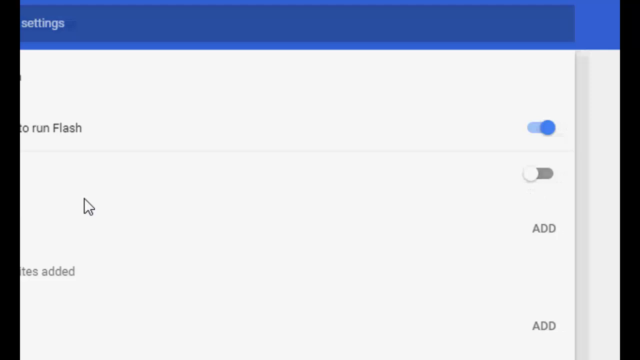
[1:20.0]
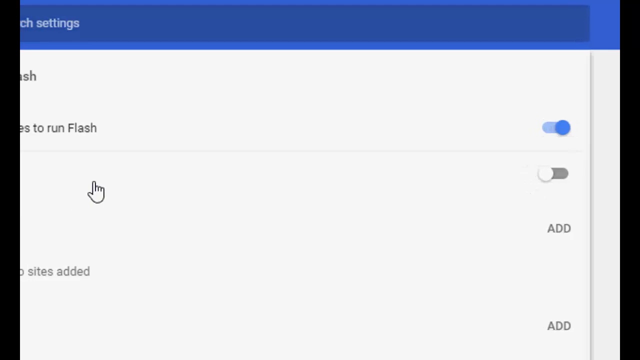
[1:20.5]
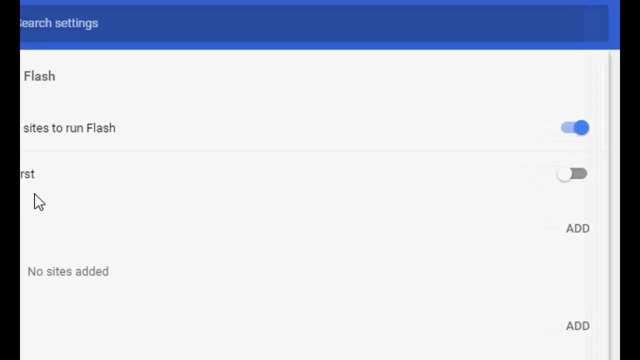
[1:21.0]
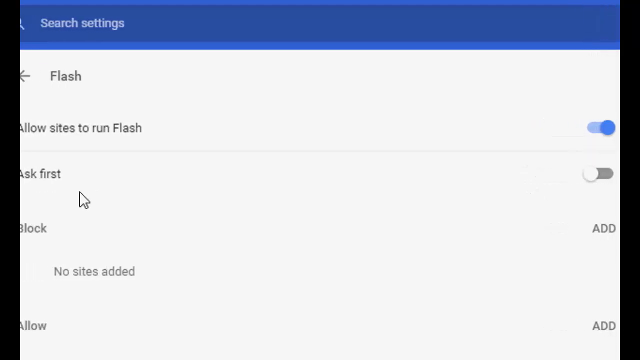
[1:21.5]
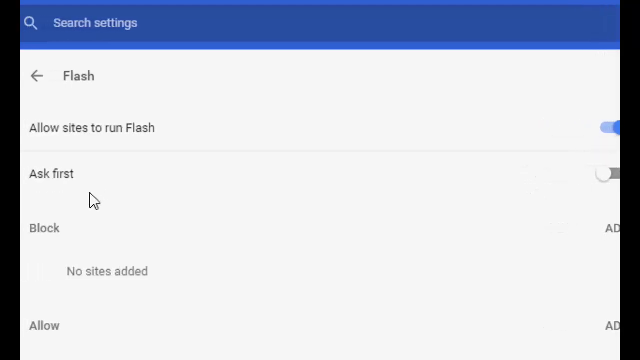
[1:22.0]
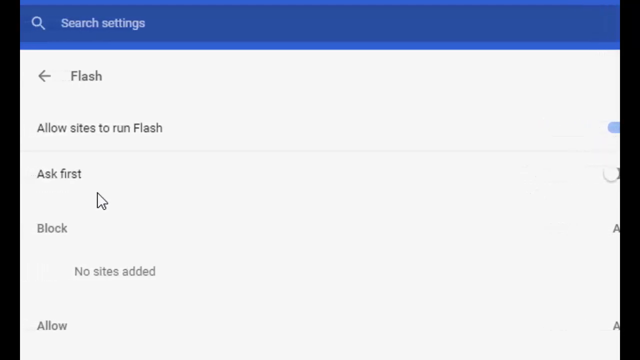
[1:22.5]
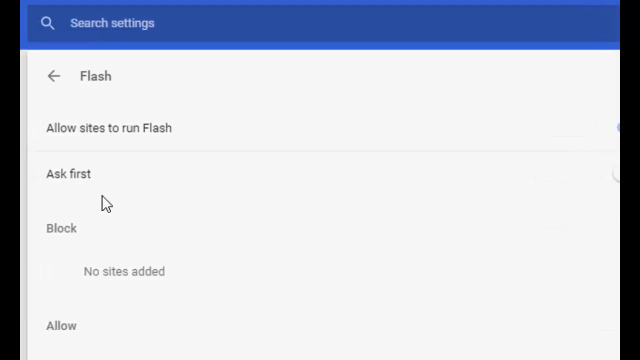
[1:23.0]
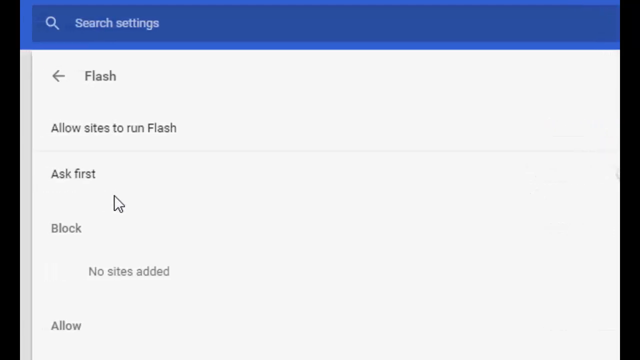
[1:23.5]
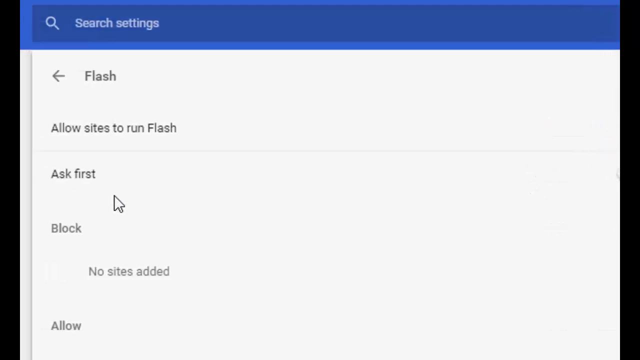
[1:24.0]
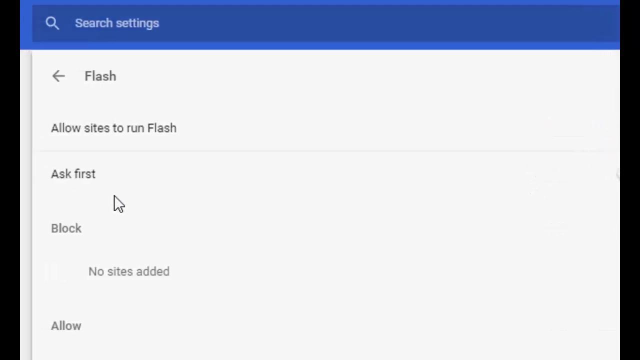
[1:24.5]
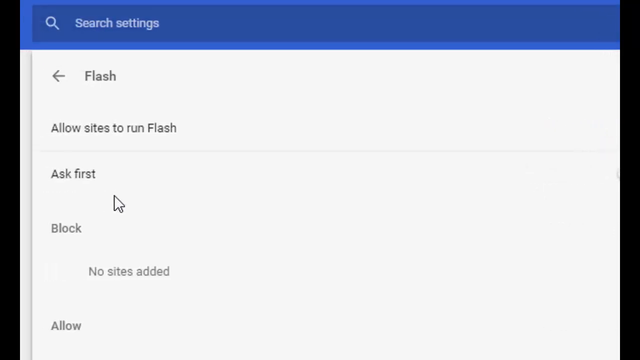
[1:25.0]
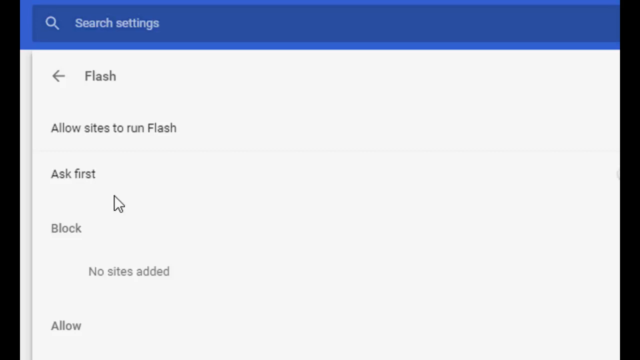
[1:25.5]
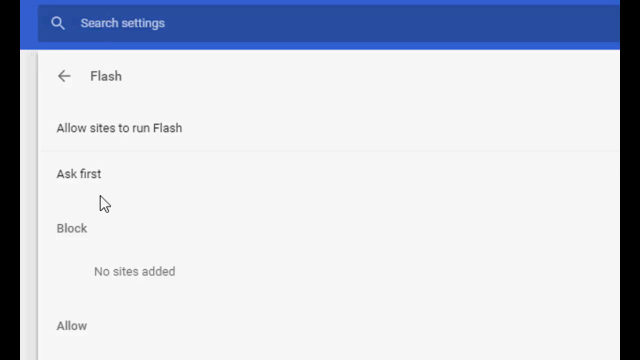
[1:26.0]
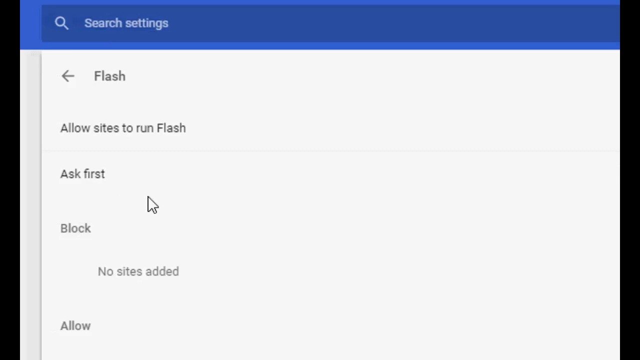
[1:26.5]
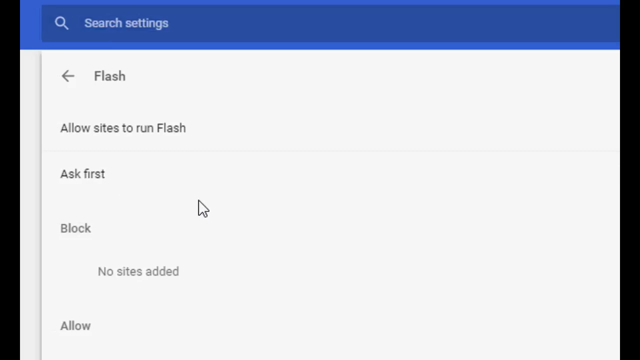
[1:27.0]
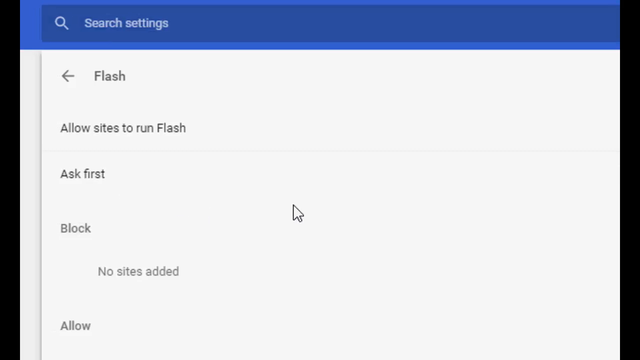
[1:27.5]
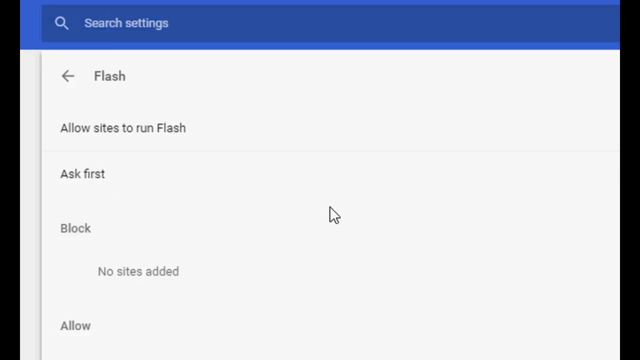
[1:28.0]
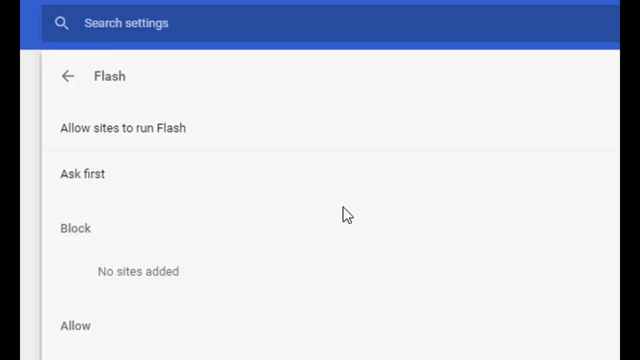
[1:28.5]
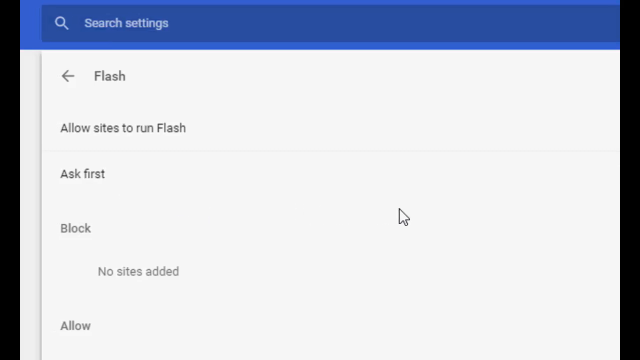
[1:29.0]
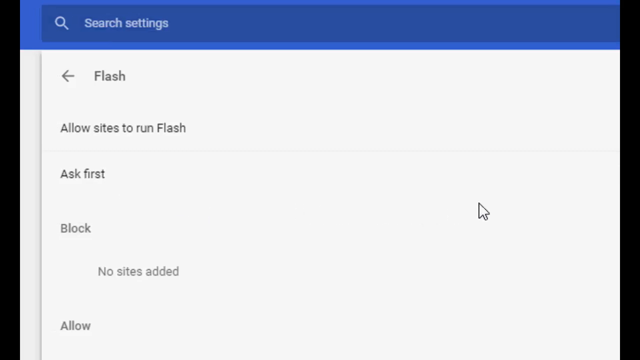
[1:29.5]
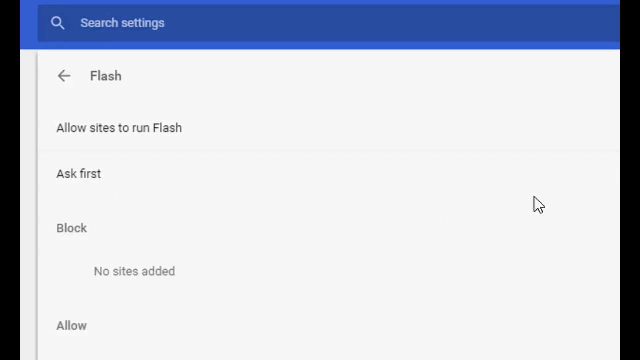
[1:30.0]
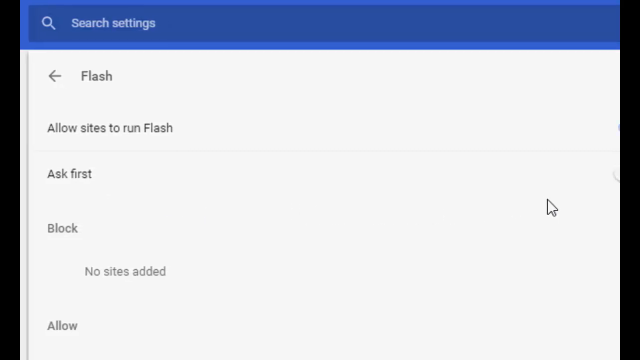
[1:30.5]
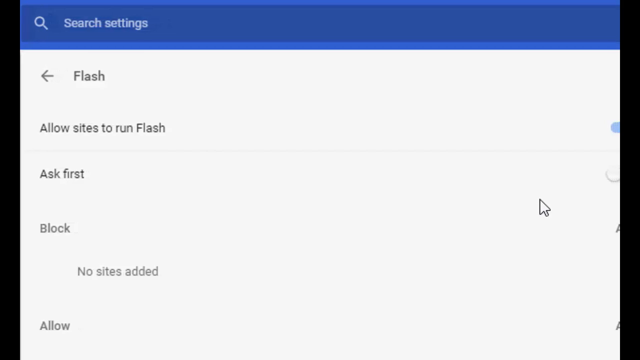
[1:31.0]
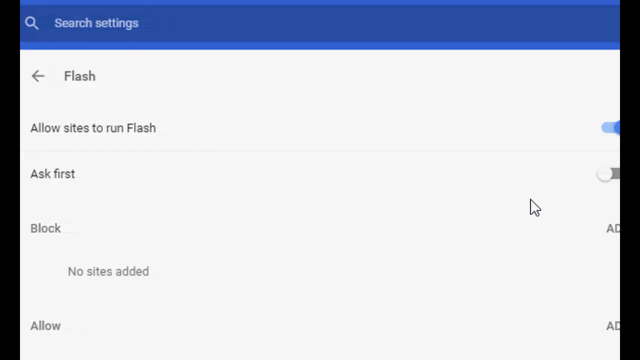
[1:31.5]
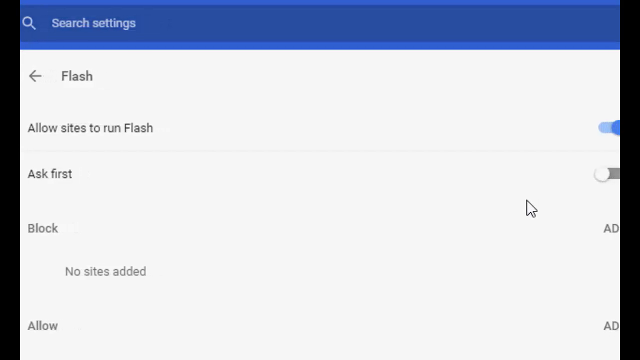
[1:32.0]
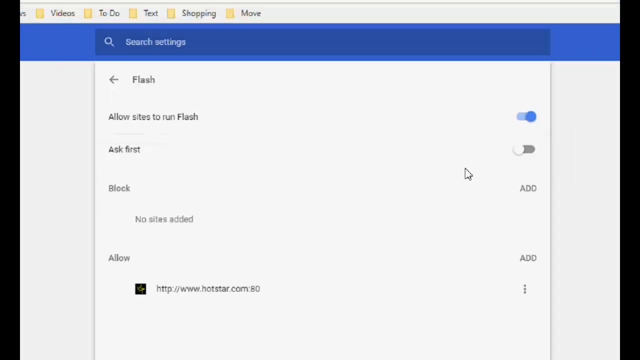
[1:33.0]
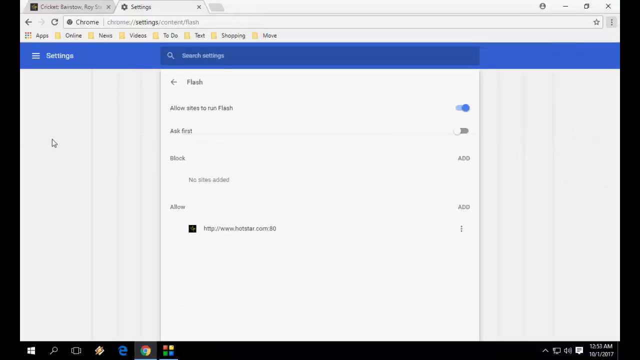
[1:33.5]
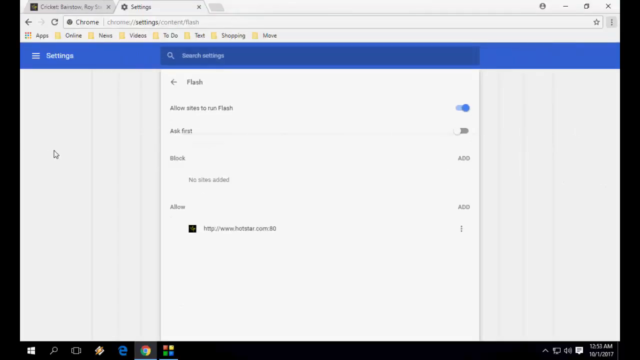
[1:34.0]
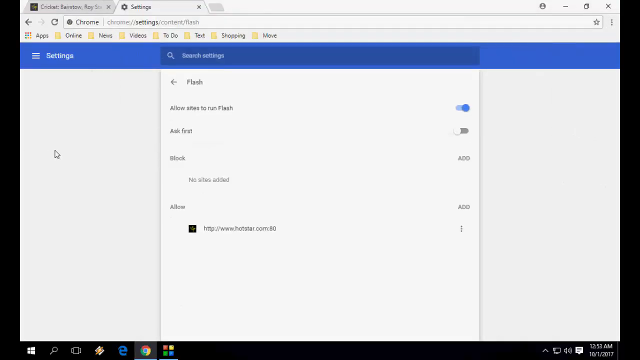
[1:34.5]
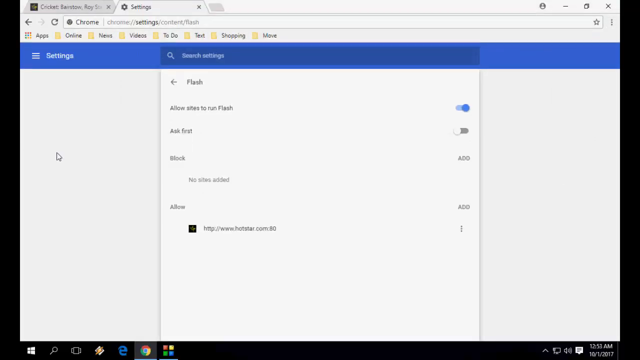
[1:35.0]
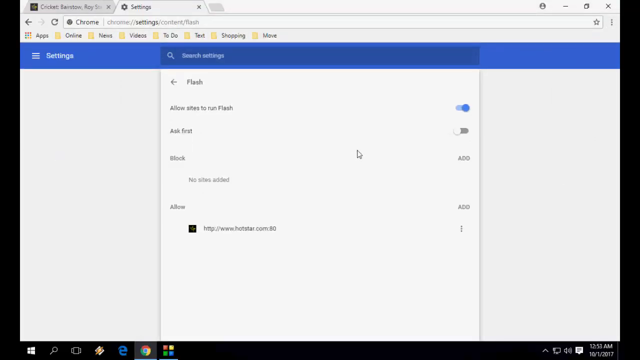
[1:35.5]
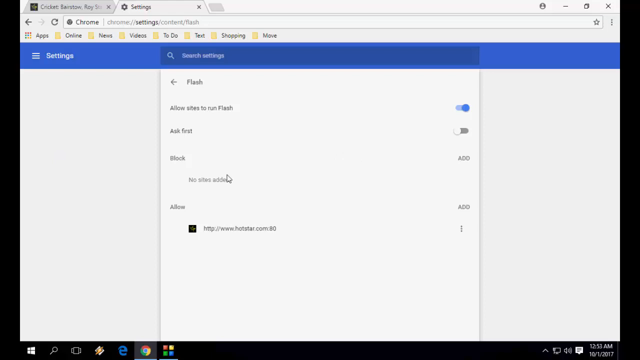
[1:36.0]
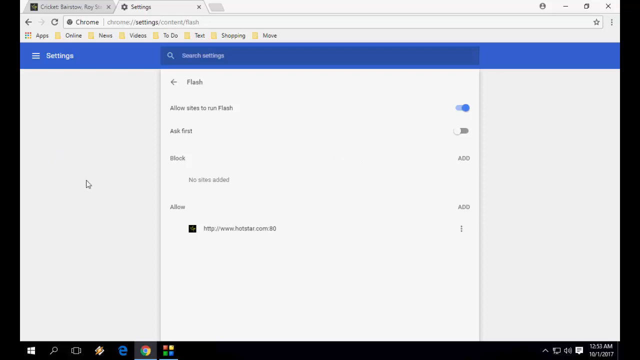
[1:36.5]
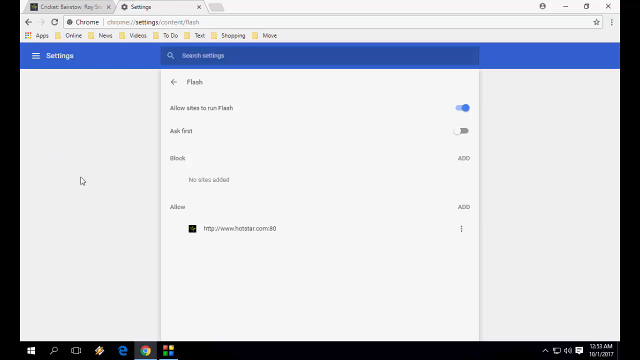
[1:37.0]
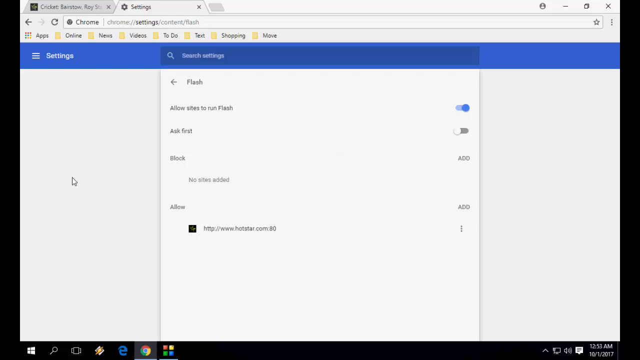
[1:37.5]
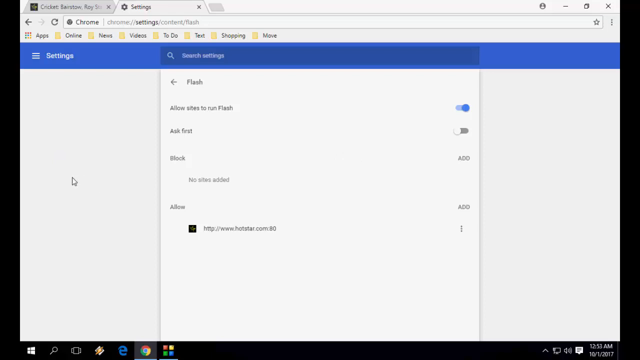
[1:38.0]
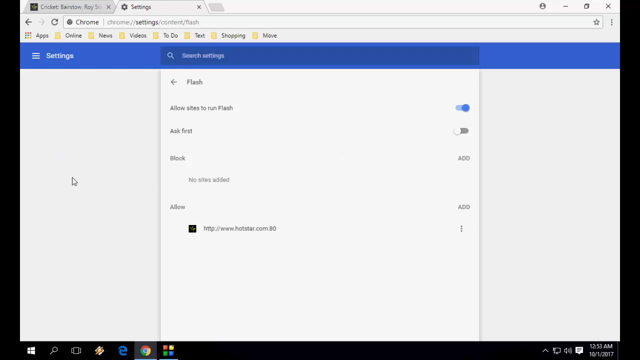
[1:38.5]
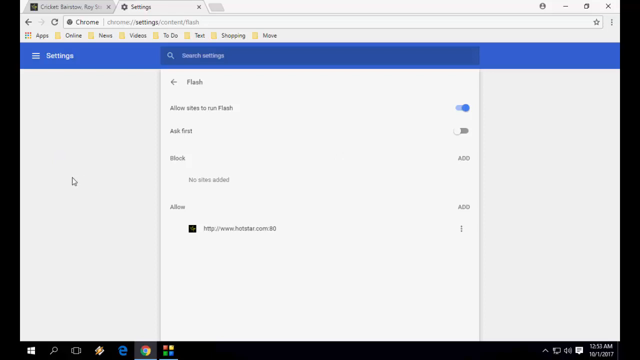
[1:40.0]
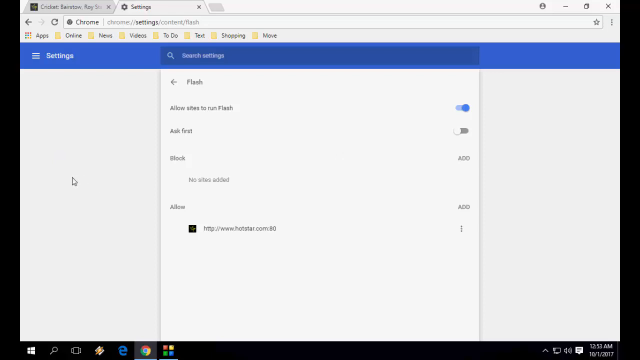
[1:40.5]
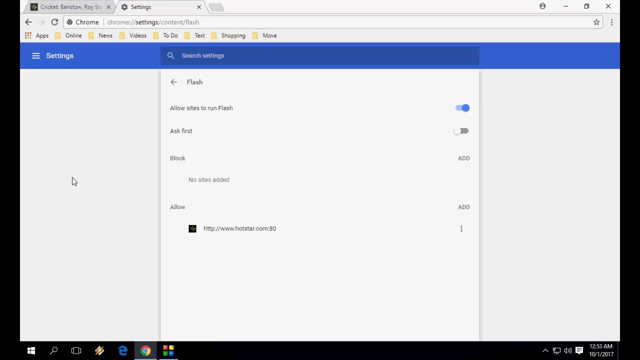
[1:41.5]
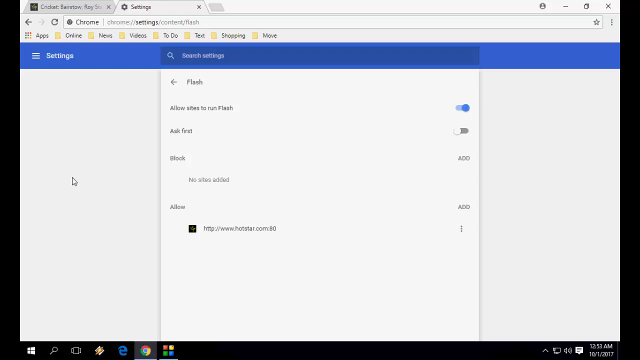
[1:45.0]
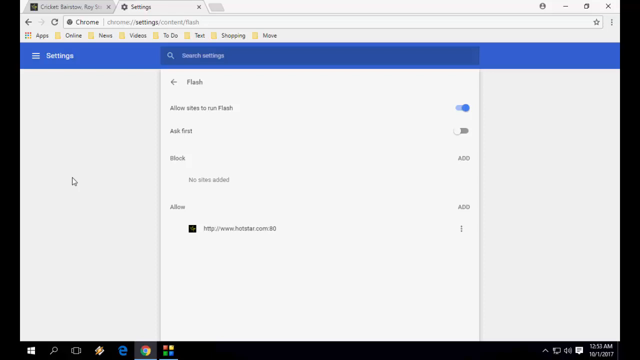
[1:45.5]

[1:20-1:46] With "Ask First" disabled, the process is complete. The video does not proceed any further and stops where it is, apparently its end. The fonts are very clear.